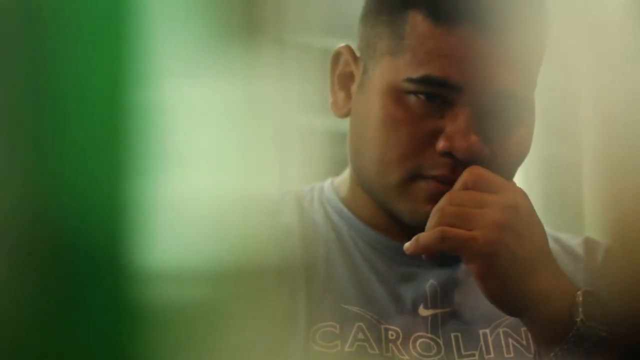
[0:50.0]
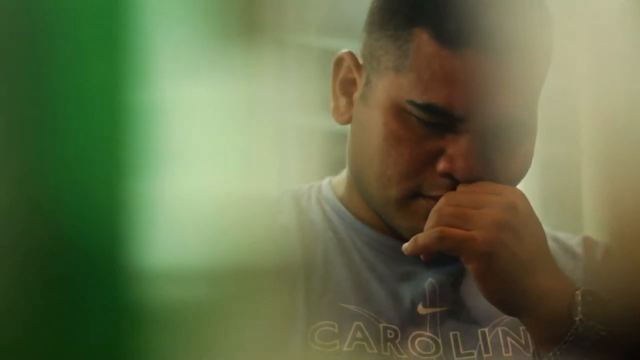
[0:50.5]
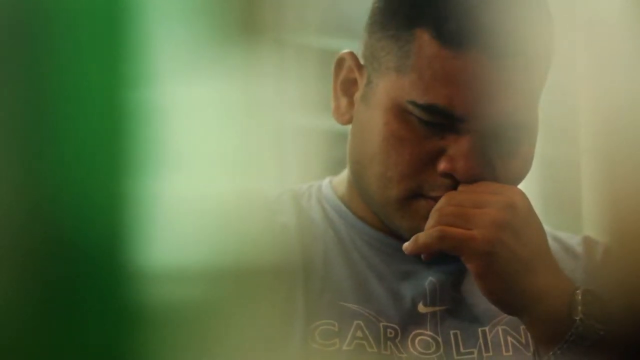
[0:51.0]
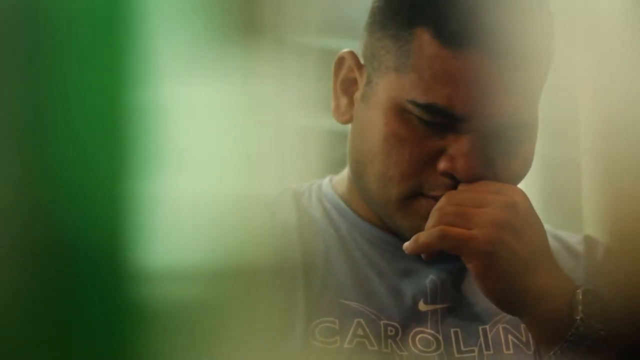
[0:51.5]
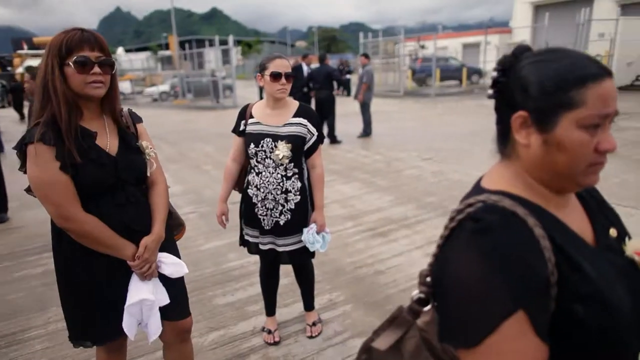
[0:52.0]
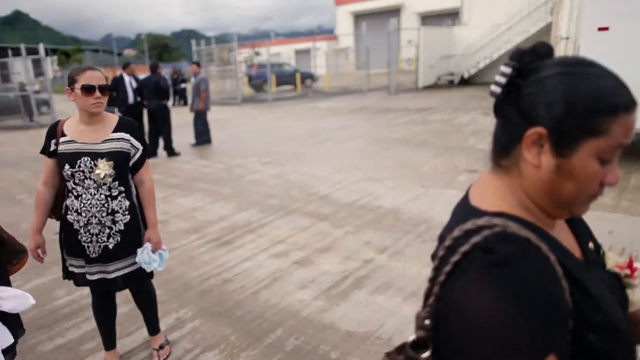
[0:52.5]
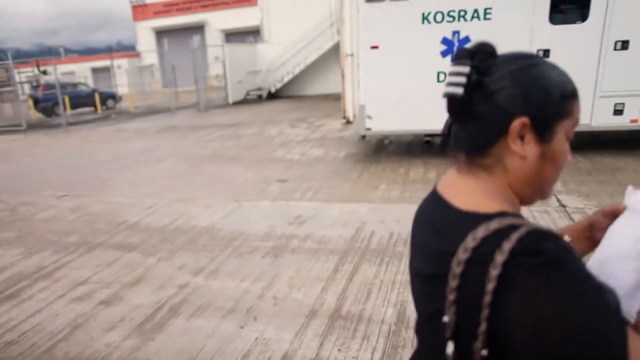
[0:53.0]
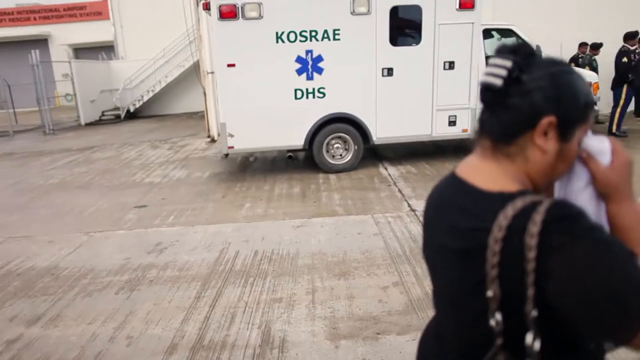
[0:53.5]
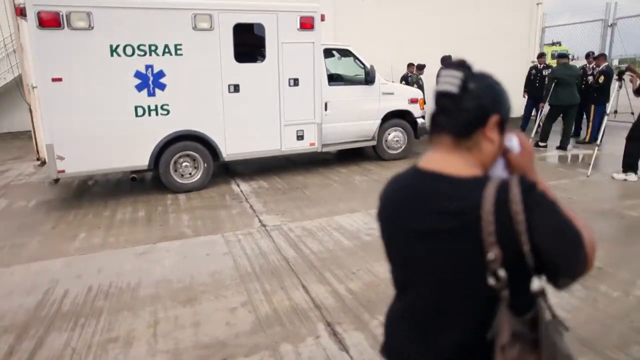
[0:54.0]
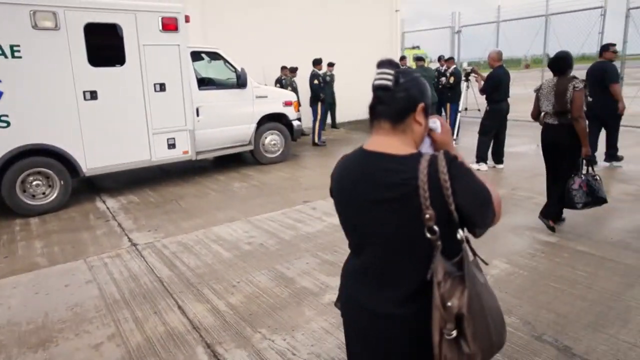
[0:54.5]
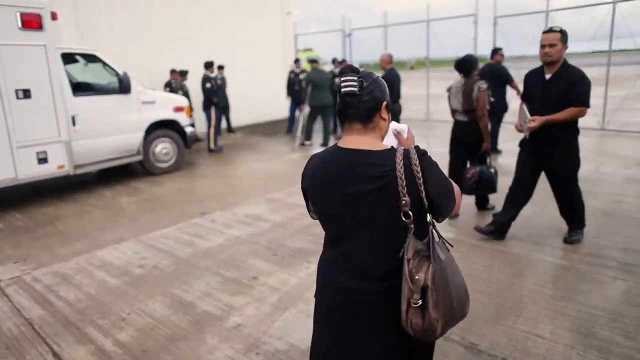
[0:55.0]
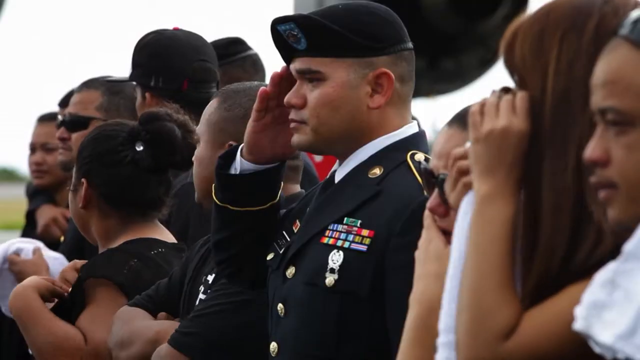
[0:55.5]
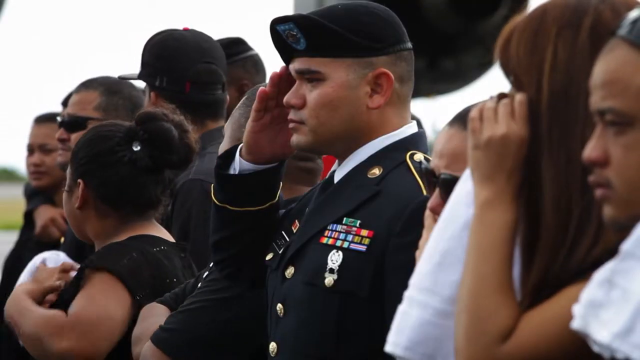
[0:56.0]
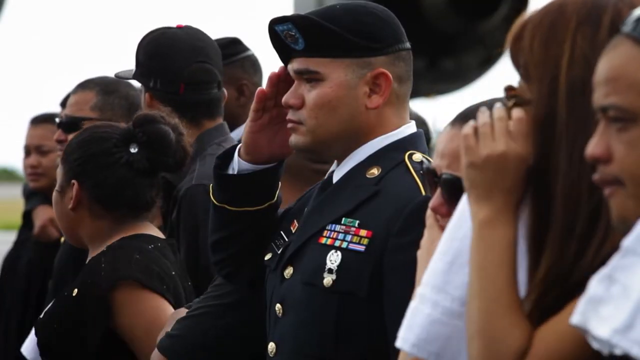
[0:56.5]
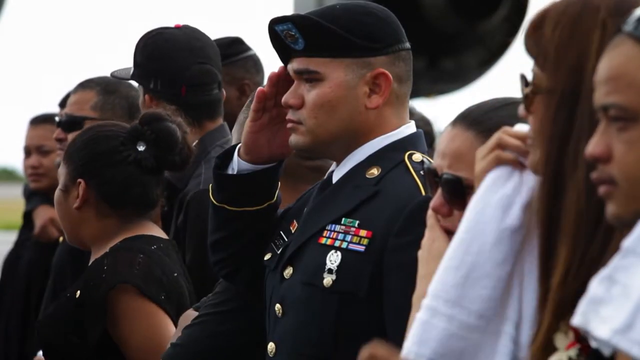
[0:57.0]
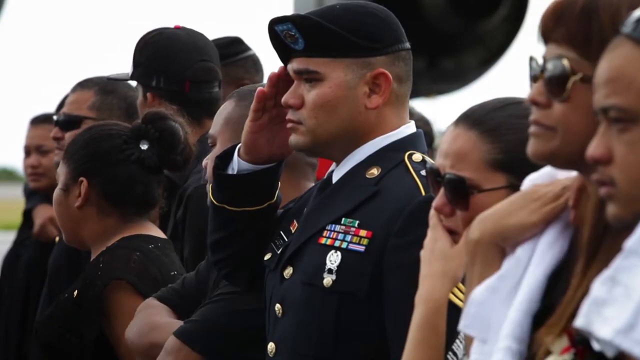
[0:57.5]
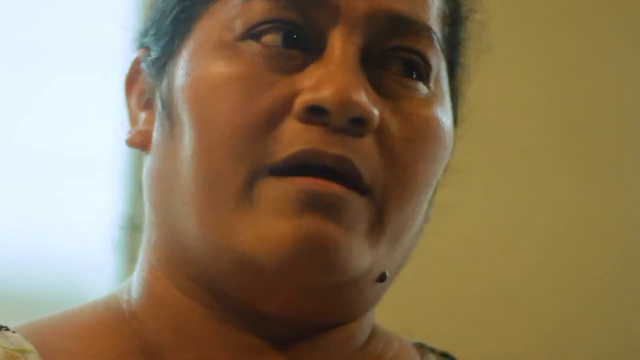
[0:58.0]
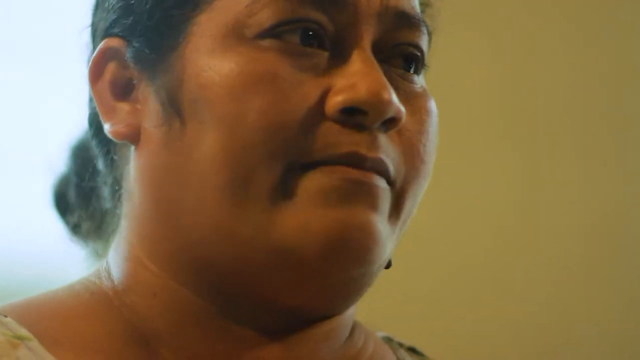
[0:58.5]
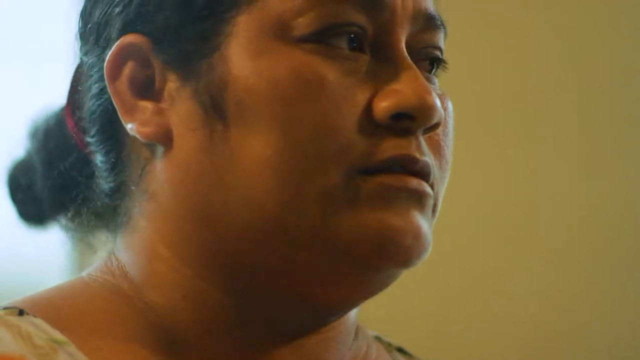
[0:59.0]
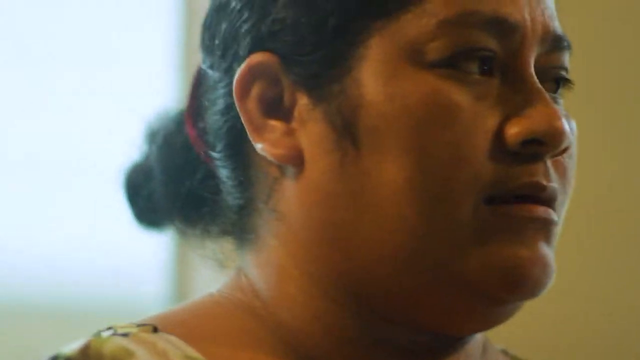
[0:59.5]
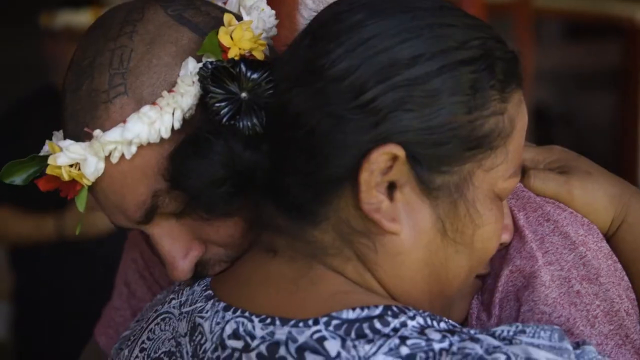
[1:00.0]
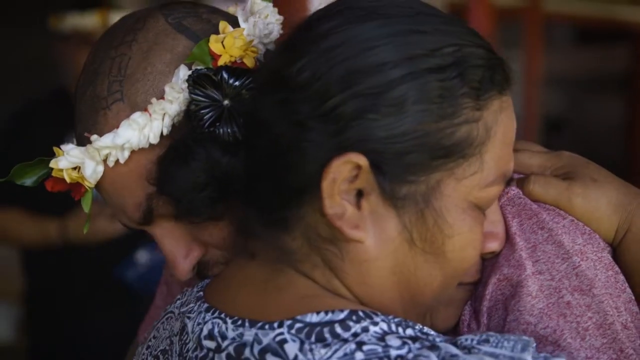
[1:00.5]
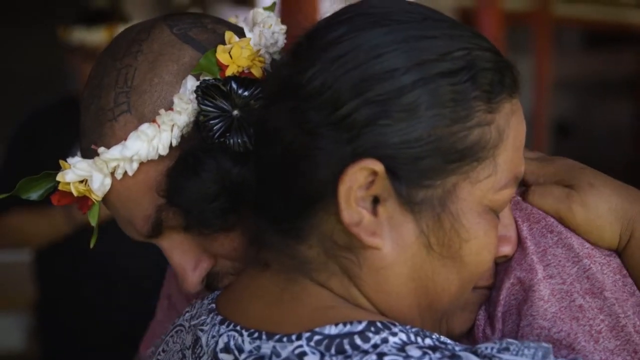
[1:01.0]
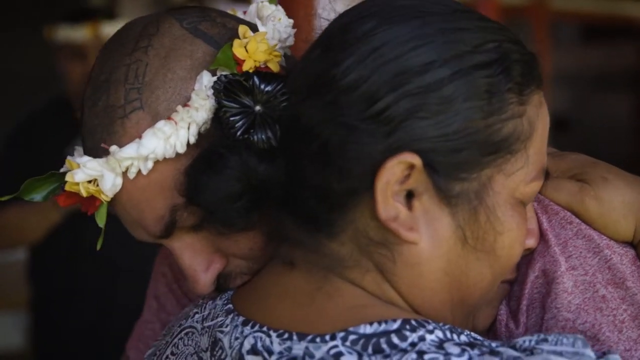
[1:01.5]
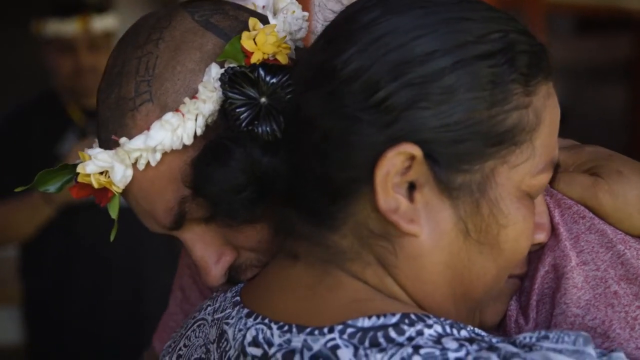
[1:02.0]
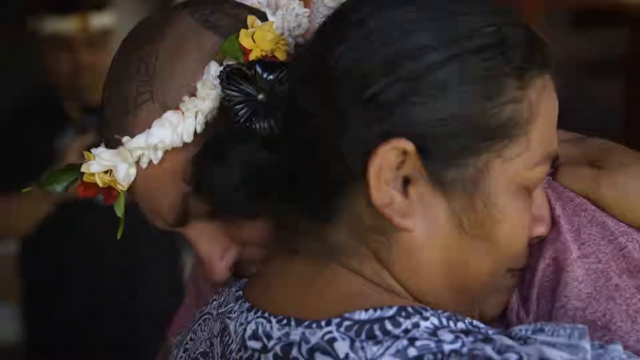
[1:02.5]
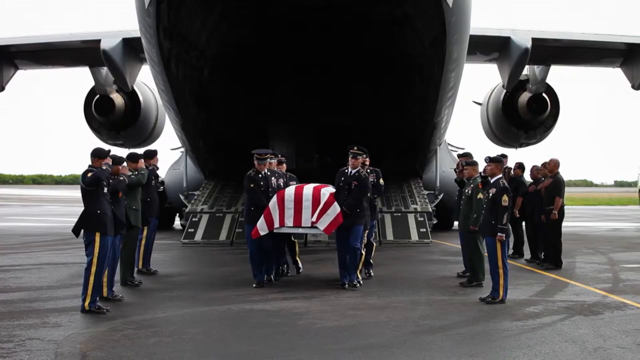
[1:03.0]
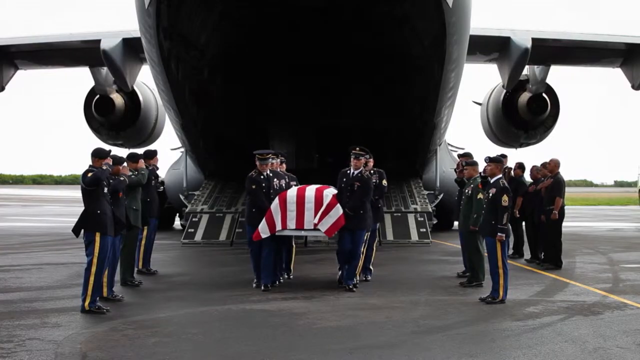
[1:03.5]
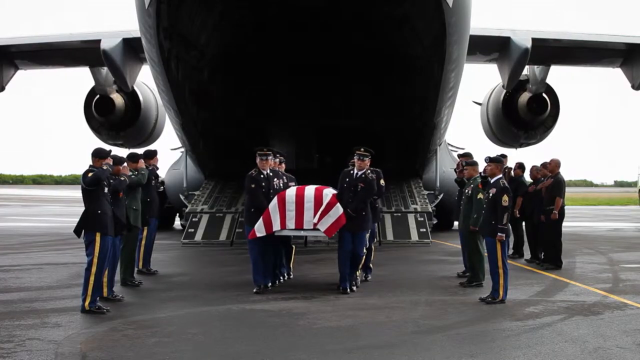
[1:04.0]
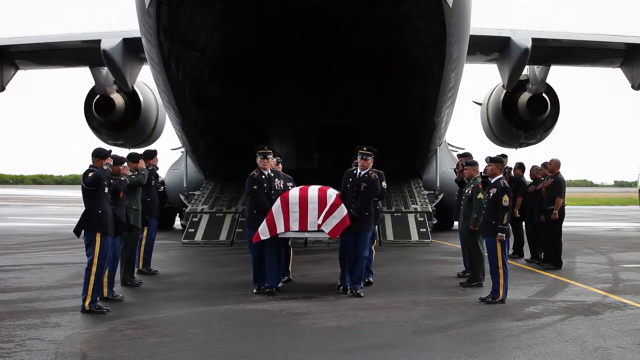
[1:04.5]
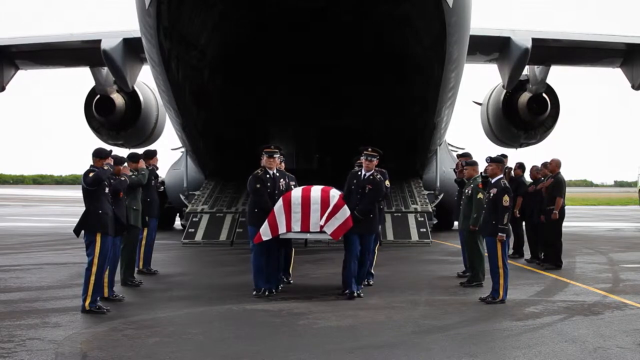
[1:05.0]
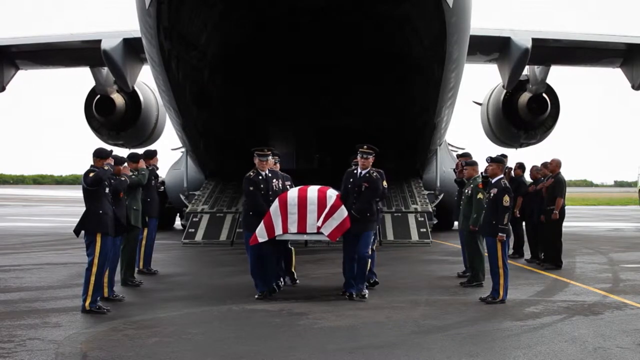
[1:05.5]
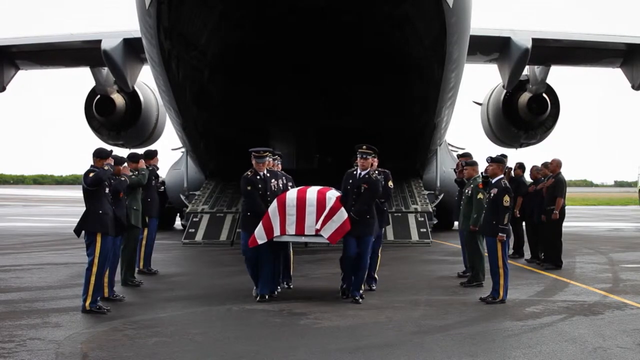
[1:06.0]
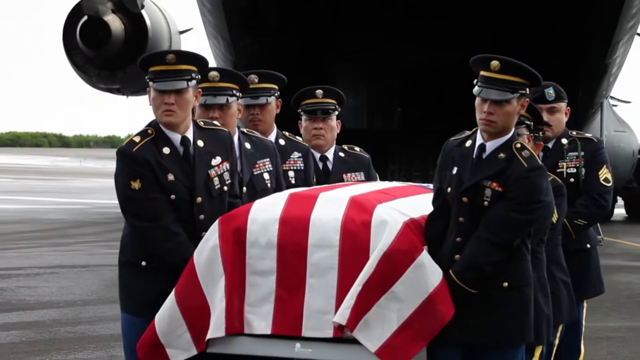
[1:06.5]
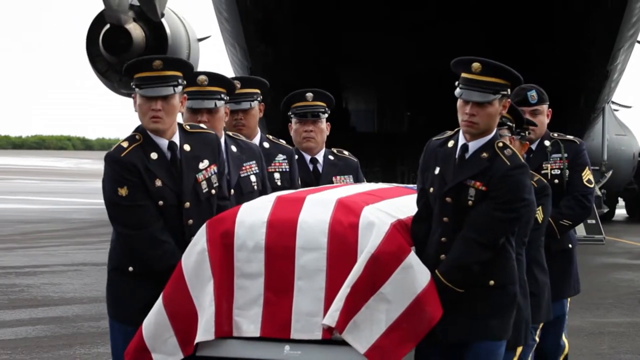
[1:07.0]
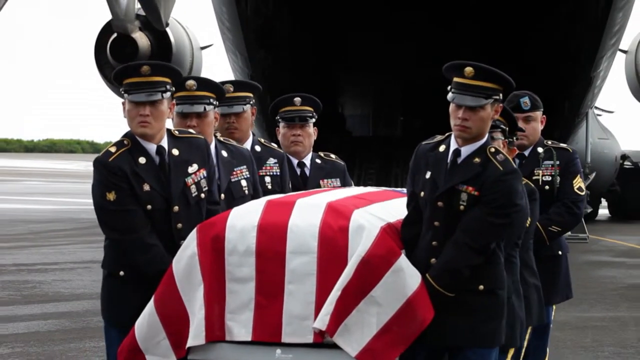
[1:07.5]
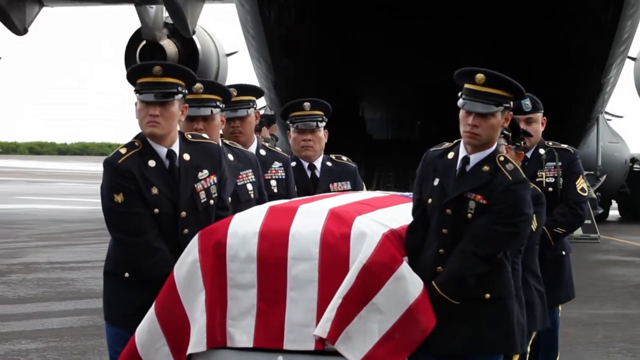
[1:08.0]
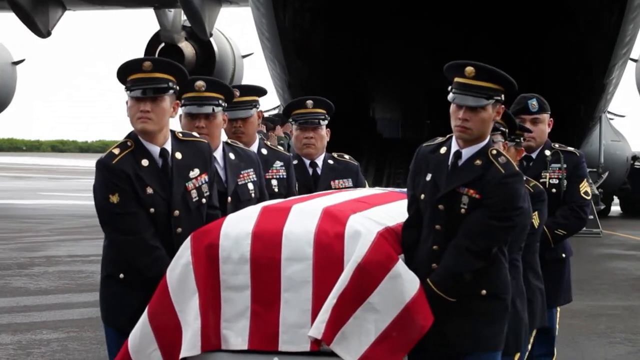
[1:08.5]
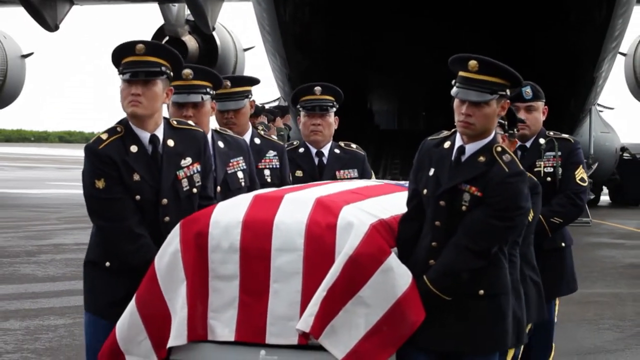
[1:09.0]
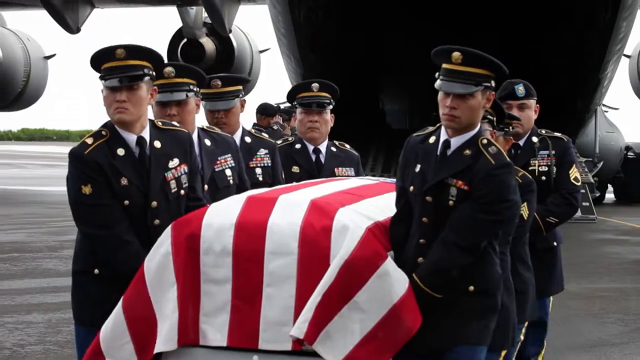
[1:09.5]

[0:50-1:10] The man rests his chin on his hand, framed at his head and shoulders; he bends his head, looking sad, eyes closed. The scene changes to women dressed in black and white outfits. In the background three men stand, one in a black suit with a white shirt and the other two dressed more casually. There is a building, and a car that looks like an SUV is in the far background. One woman wearing black, her dark hair pulled up in a bun, walks toward the right side of the frame, holding a white handkerchief to her face and mopping tears as she walks away, seen from behind. More people dressed in black appear. A man in a full black military uniform with medals stands with people beside him looking sad; most of the people are dressed in black. The woman in the black dress who walked away is then seen from the front, the camera focusing on her face as she speaks. Next she hugs a man in a purple shirt with flowers around his head, and the camera focuses on them. Military men in ceremonial uniforms carry a casket covered with the American flag, four men on either side. The casket has just been carried out of the belly of a large C-130 military cargo plane. Other military men, about six on either side to the left and right of the casket, salute the men carrying it.